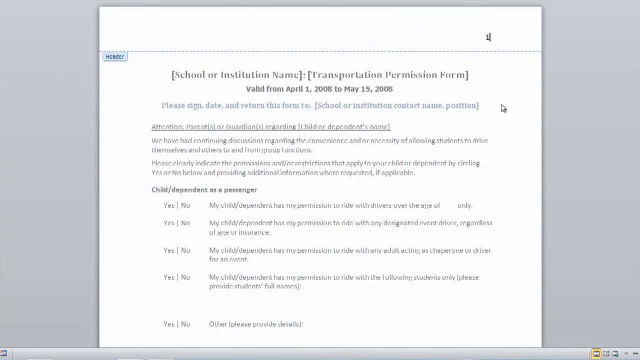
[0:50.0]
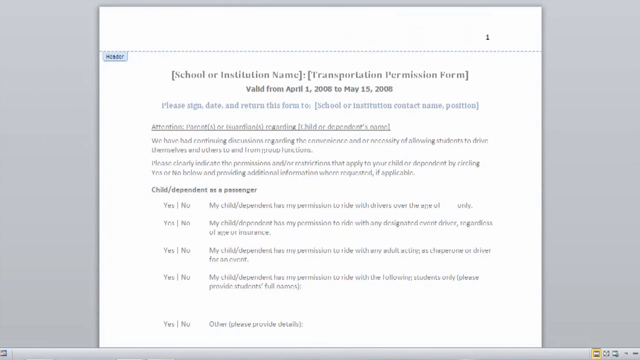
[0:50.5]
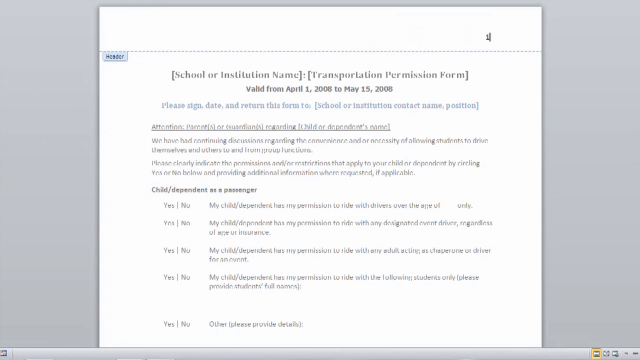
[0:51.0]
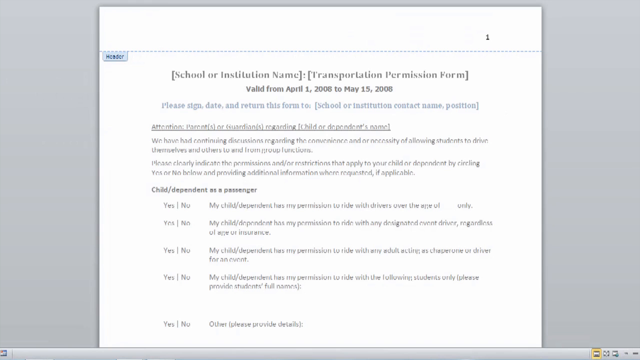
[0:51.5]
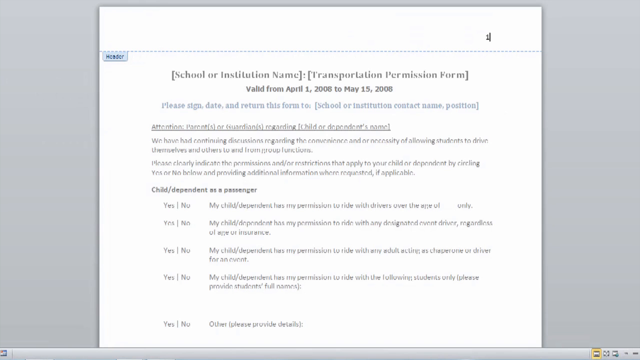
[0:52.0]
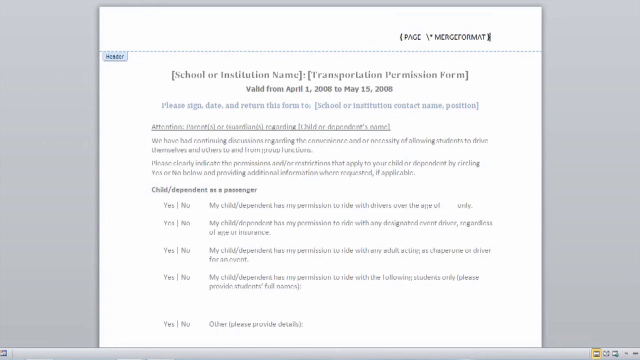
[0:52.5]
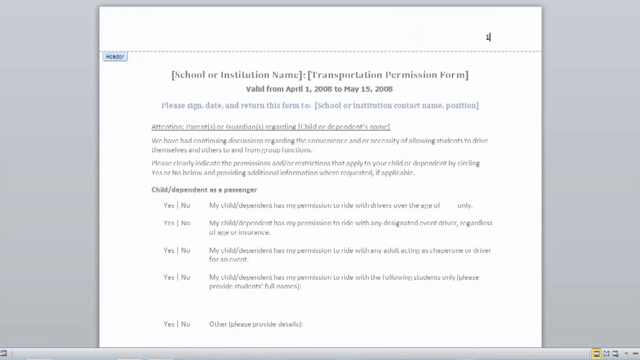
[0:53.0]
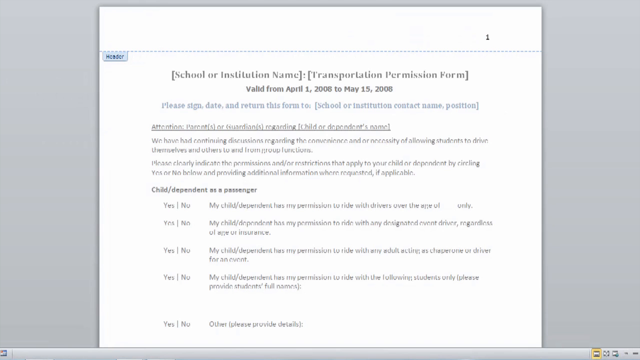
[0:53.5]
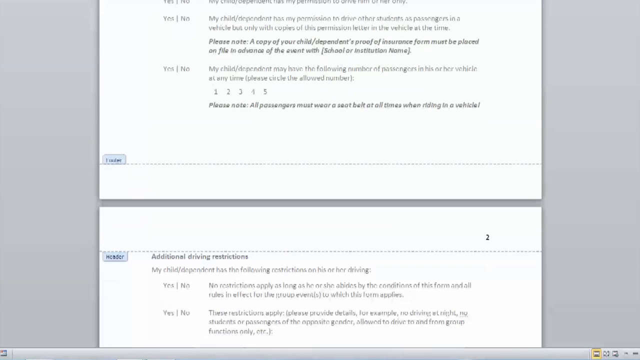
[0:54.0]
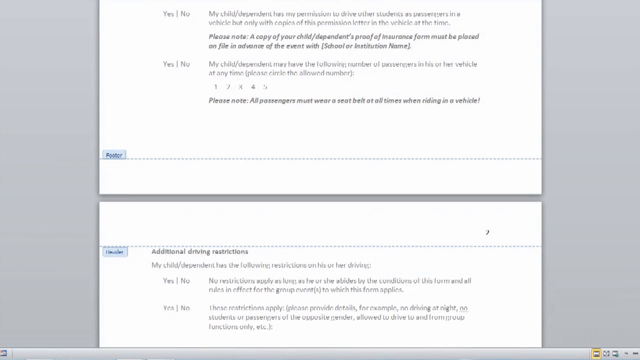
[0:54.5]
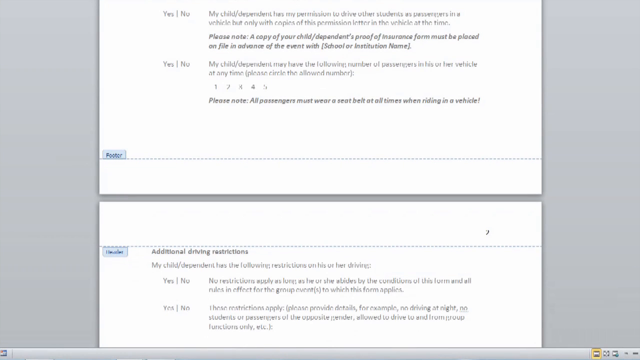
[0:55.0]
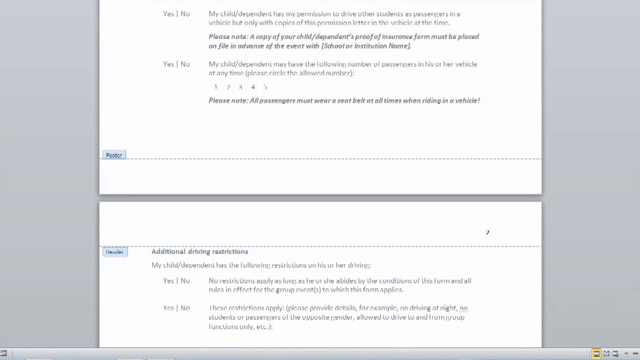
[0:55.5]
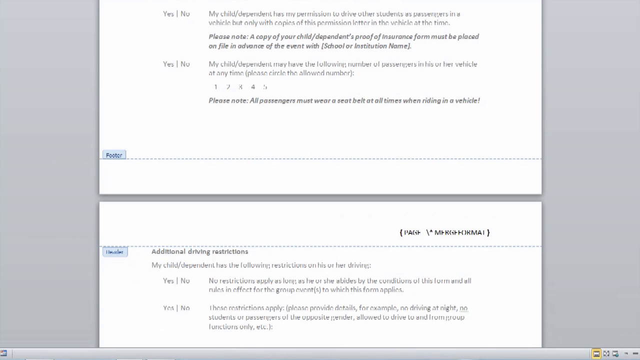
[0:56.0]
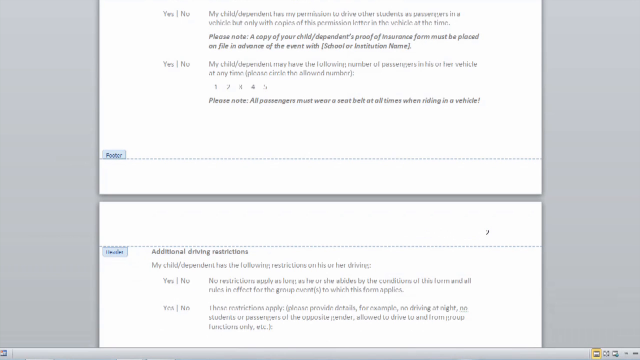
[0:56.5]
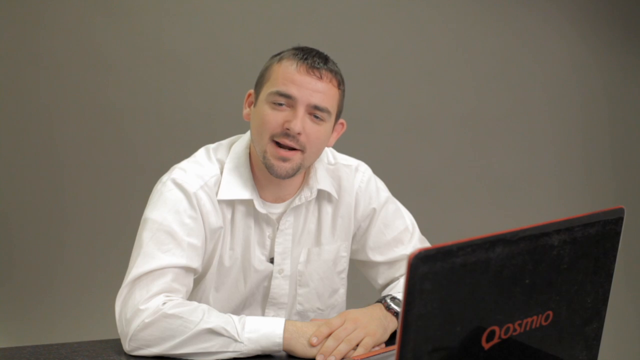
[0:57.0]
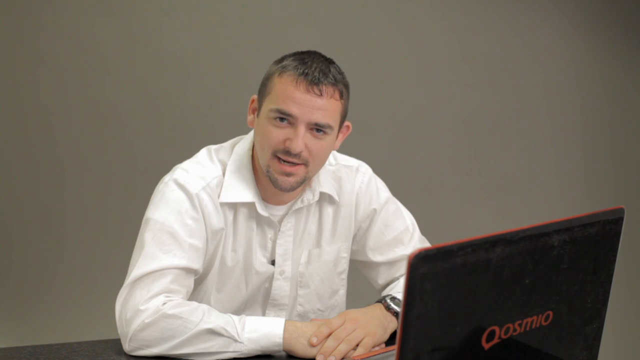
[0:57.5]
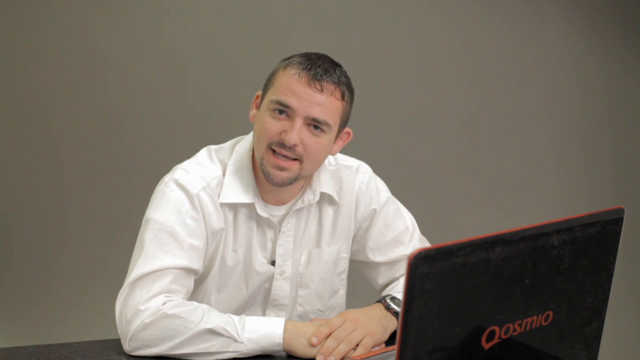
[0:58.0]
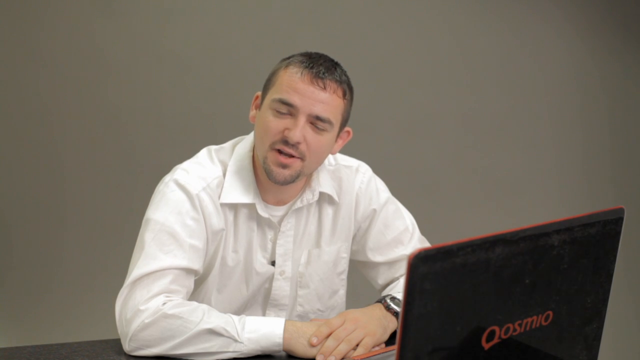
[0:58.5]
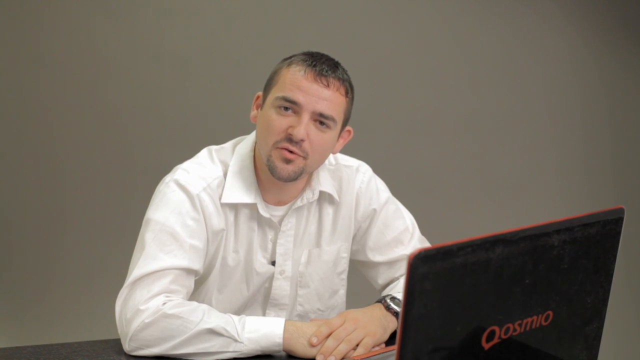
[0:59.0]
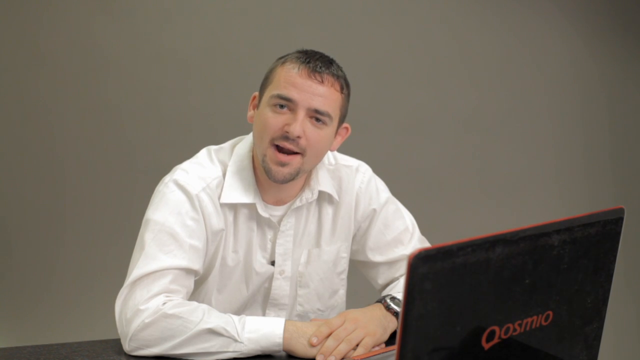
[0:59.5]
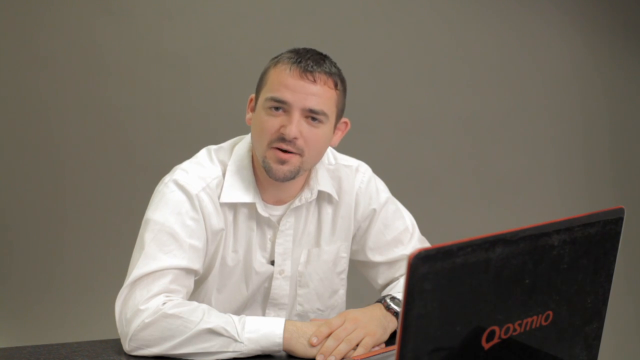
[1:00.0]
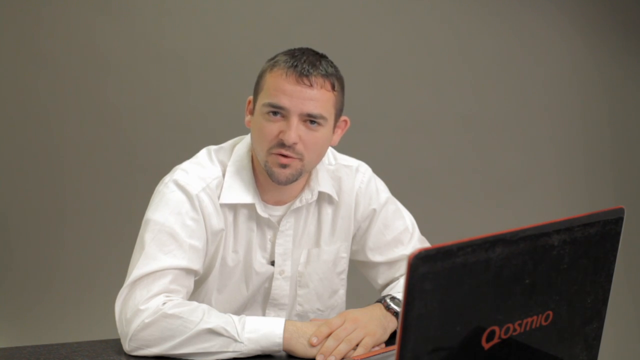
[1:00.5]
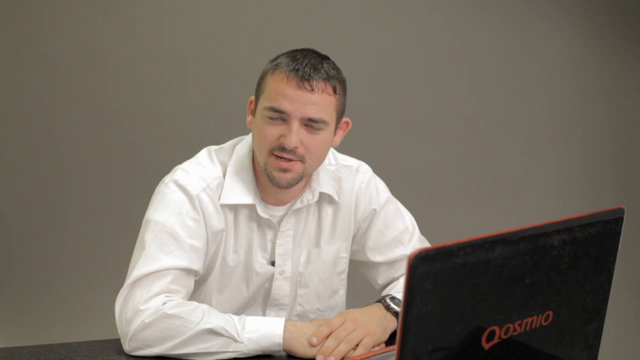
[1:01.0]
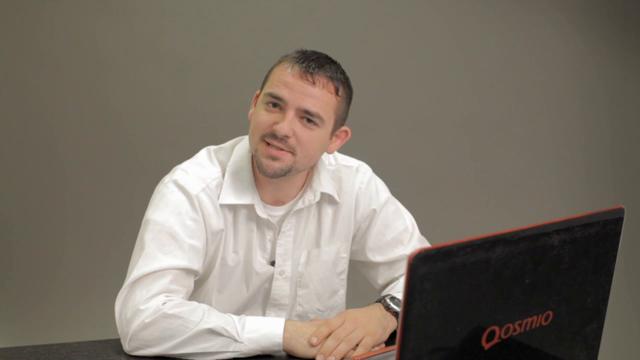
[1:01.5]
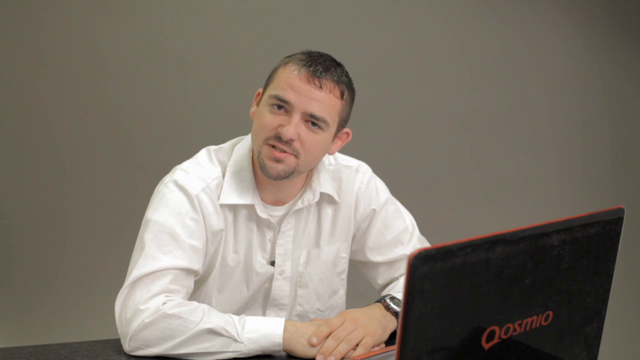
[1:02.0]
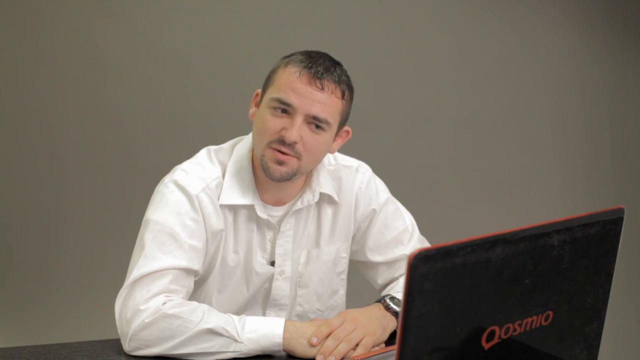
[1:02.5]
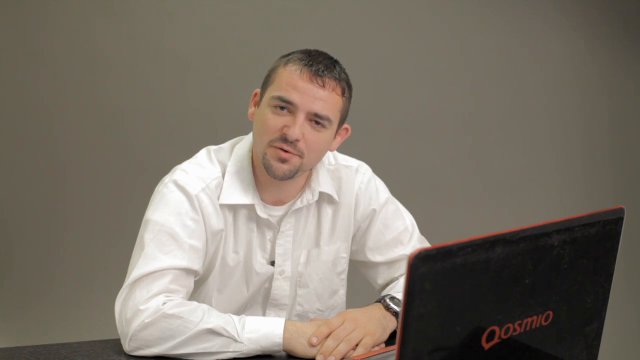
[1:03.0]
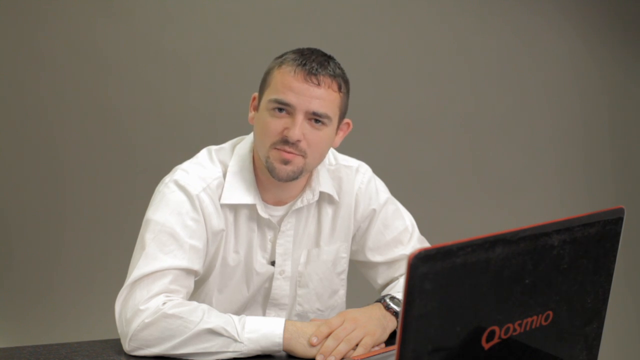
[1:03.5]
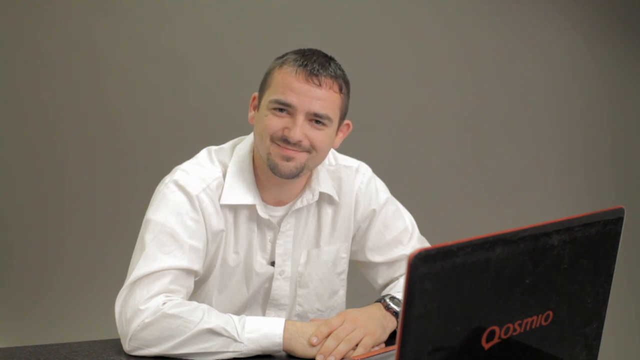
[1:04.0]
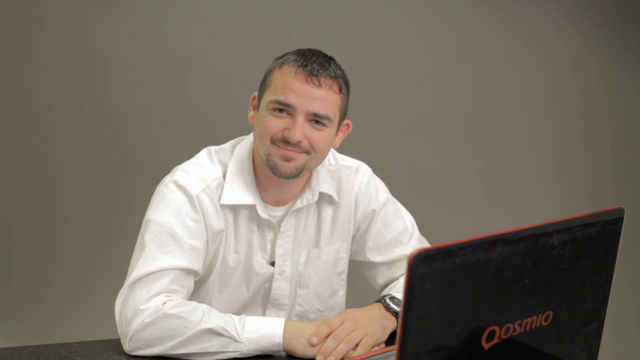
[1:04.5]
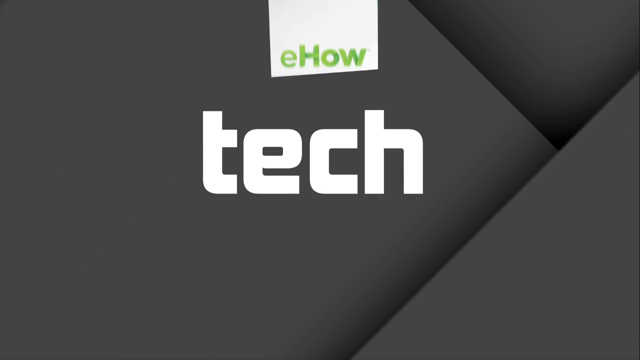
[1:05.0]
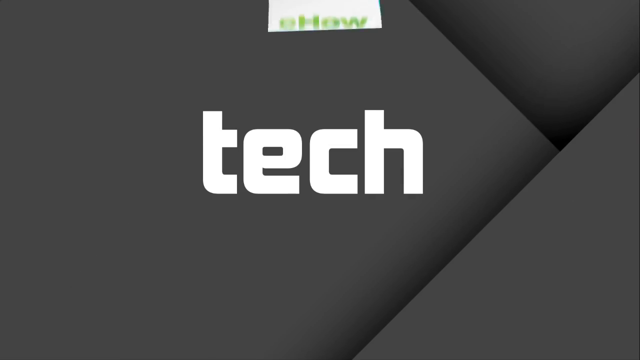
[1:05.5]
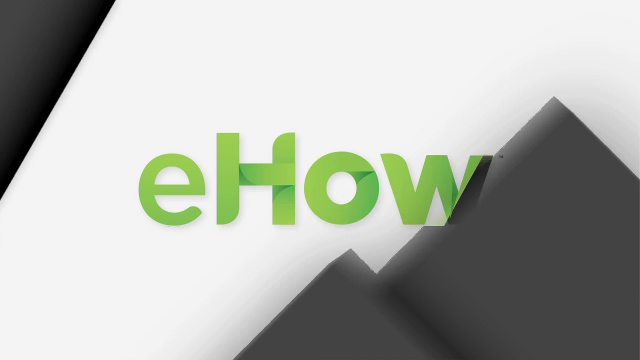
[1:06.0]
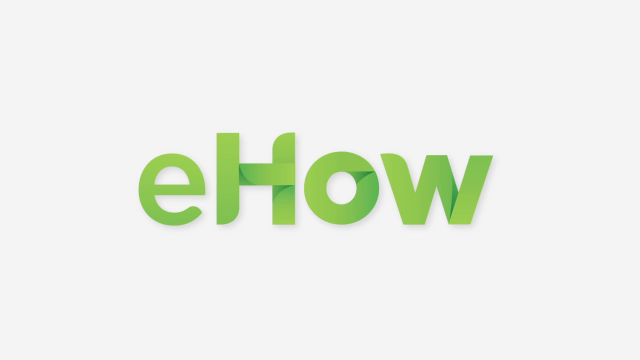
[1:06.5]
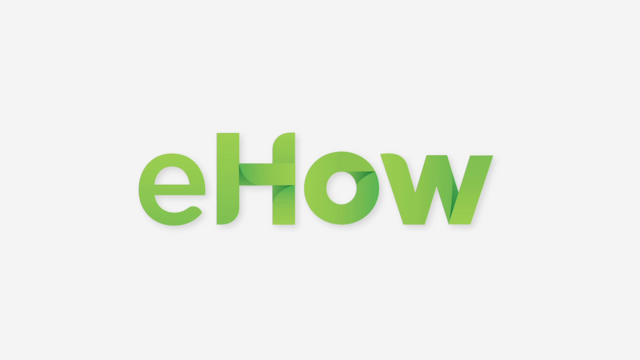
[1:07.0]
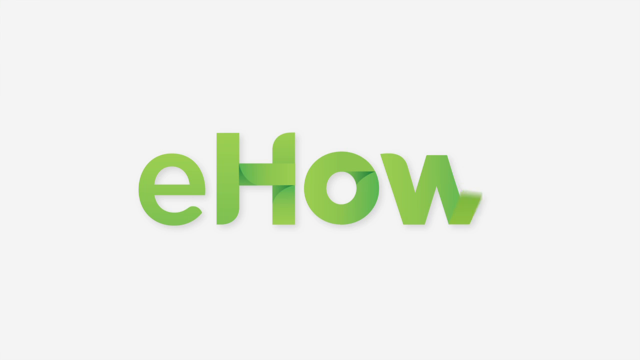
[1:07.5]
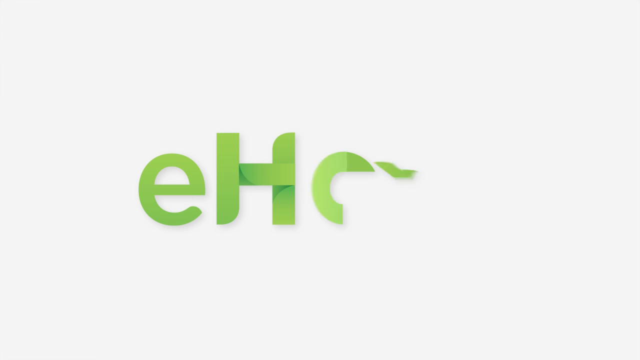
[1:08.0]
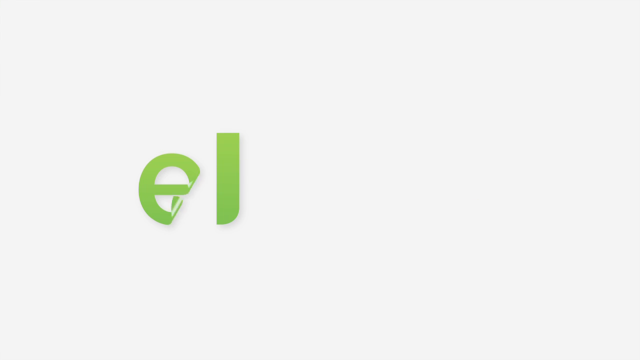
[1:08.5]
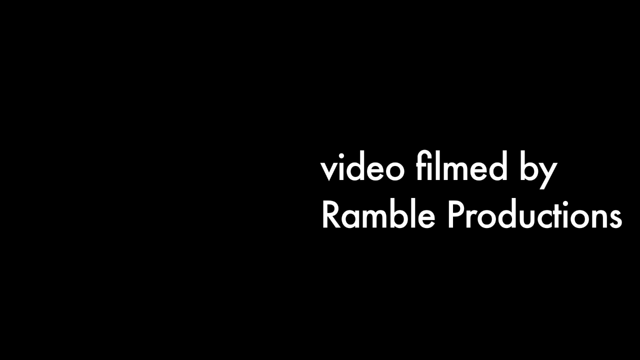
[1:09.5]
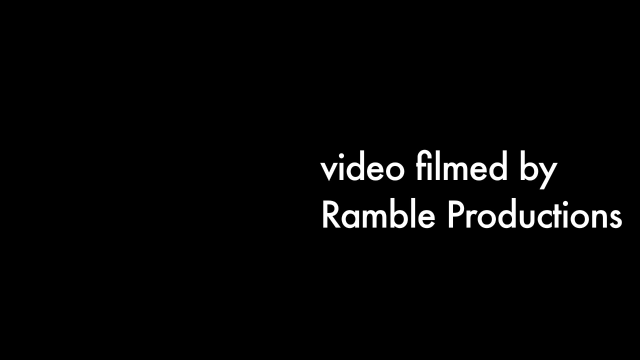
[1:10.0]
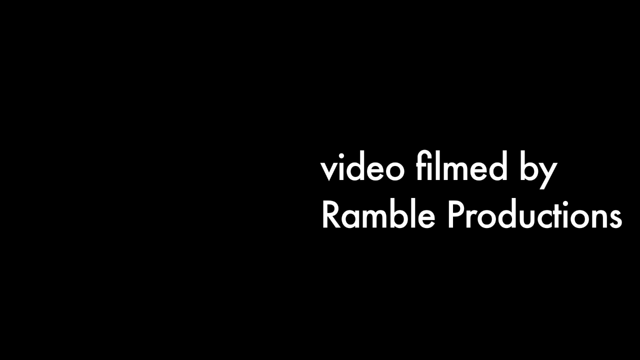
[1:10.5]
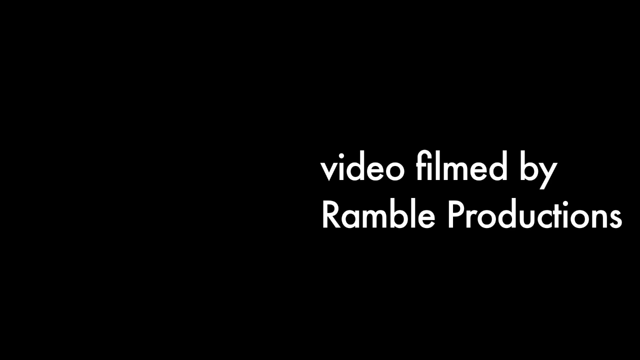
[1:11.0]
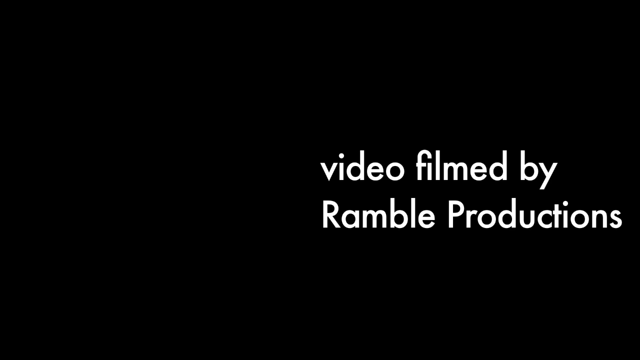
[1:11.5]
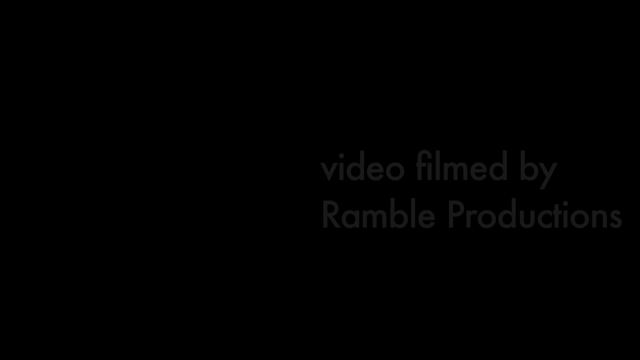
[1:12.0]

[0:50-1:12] The typed number one is undone and then redone, and the document is scrolled down to its second page. The video then cuts back to the man sitting in front of the laptop, his arms on the table and his hands on top of each other, left hand over right. He looks directly at the camera as he speaks, with a neutral facial expression, though his eyes move down towards the laptop once. When he finishes speaking he smiles, and the background turns into the black graphic reading "tech" in big bold white letters, with a white polygon at the top displaying the eHow logo. The eHow logo and white polygon move off the screen, the black background also moves off the screen, and the big green eHow logo appears in the center of the screen before the letters disappear.